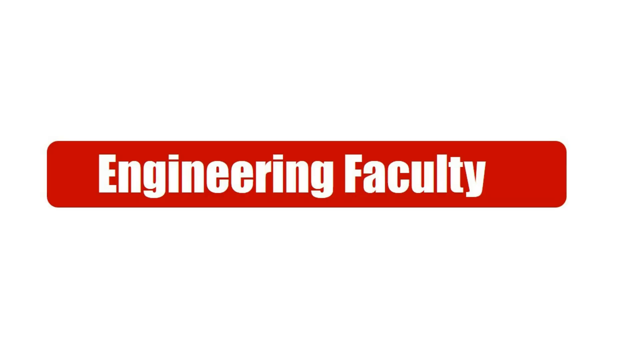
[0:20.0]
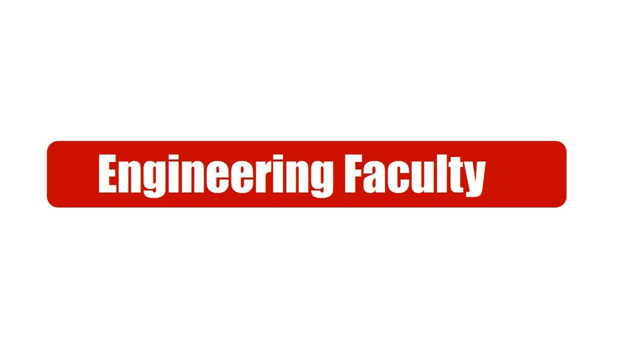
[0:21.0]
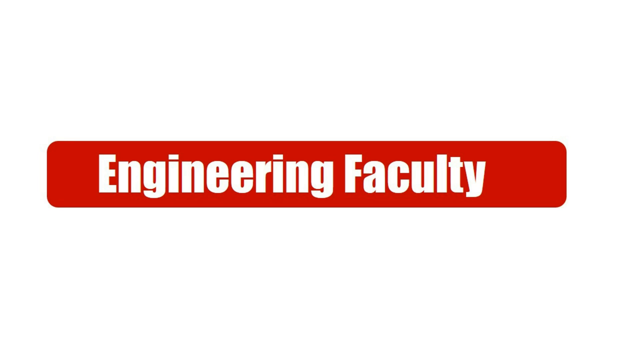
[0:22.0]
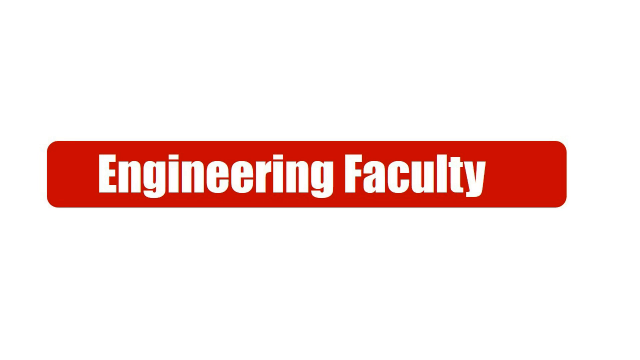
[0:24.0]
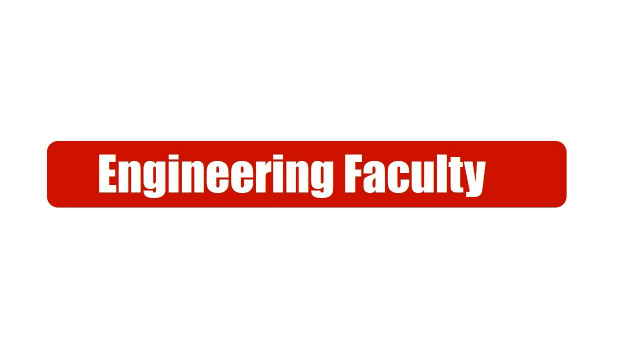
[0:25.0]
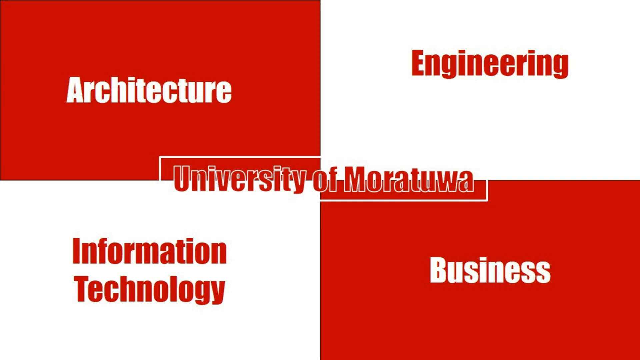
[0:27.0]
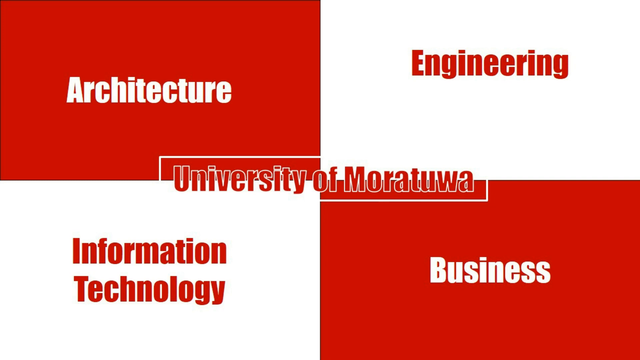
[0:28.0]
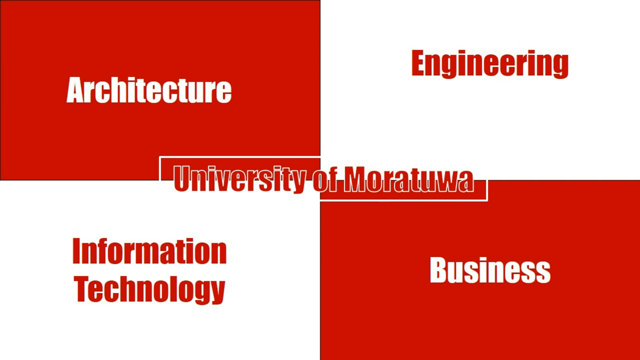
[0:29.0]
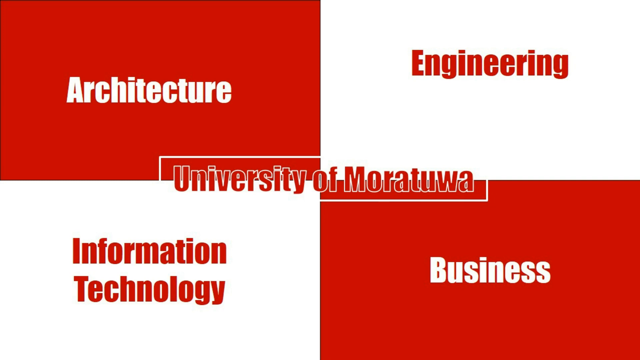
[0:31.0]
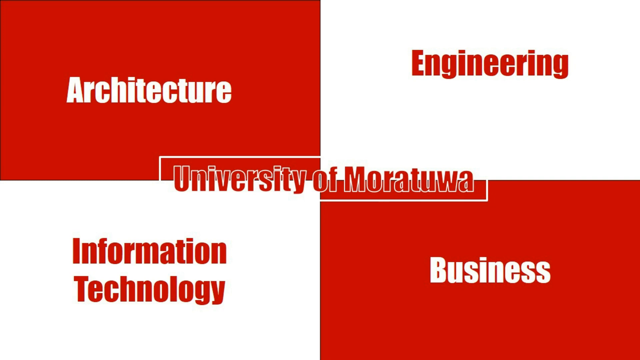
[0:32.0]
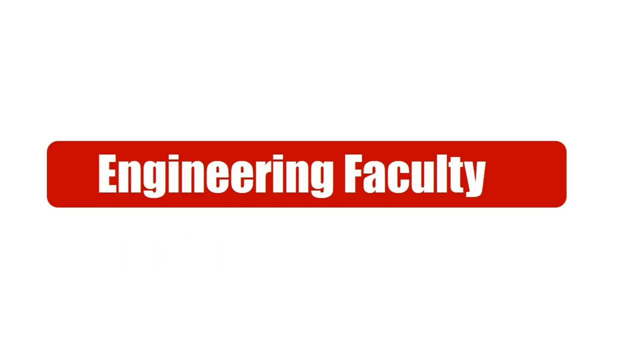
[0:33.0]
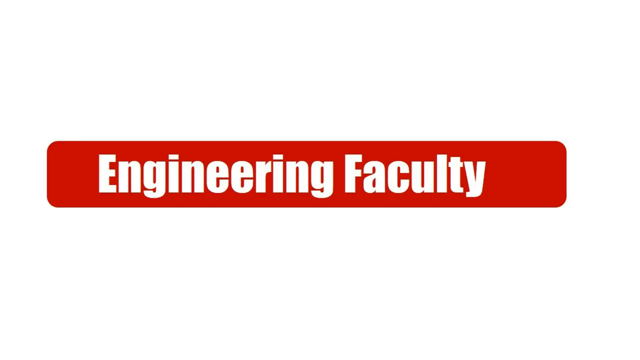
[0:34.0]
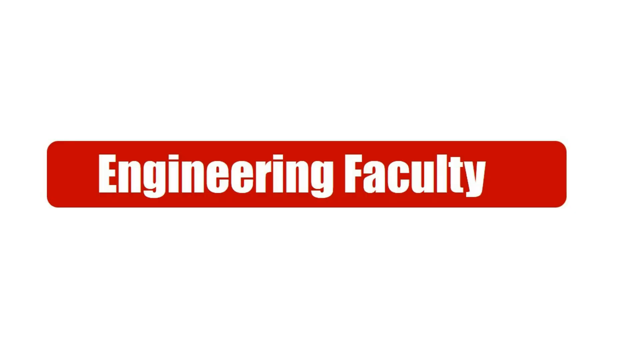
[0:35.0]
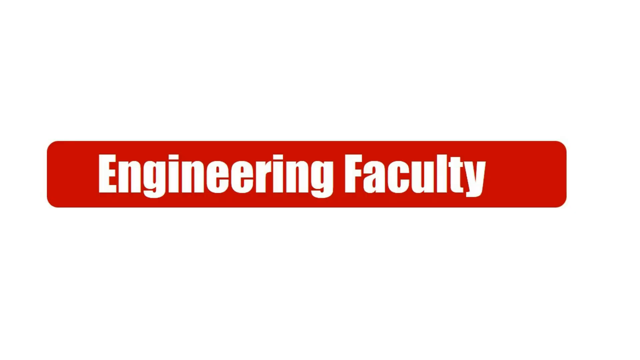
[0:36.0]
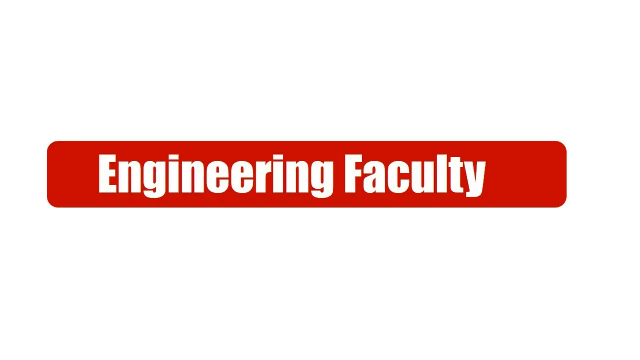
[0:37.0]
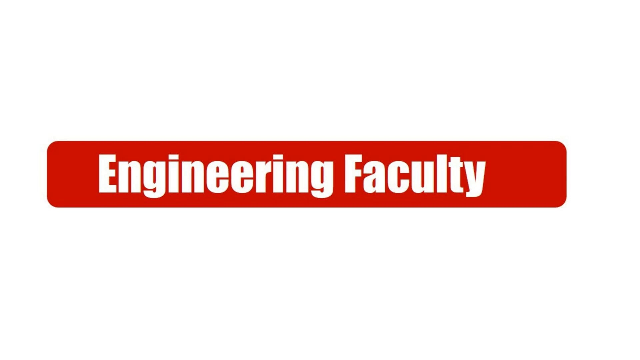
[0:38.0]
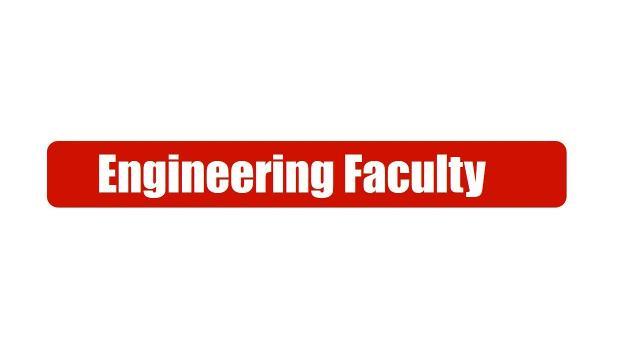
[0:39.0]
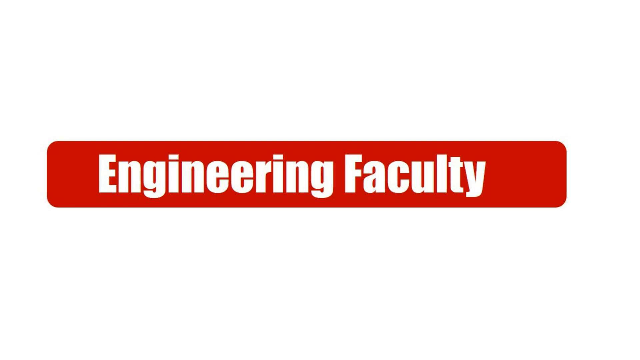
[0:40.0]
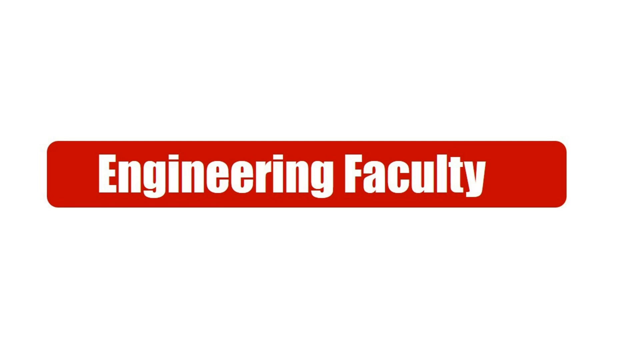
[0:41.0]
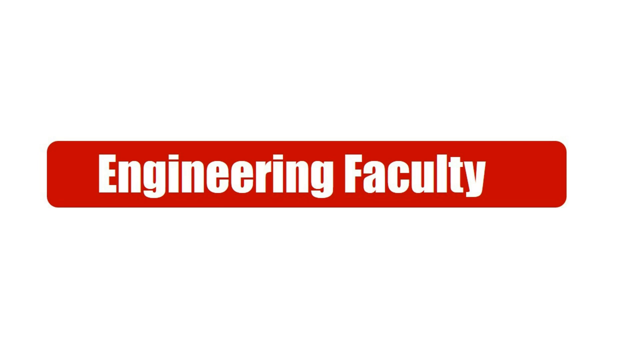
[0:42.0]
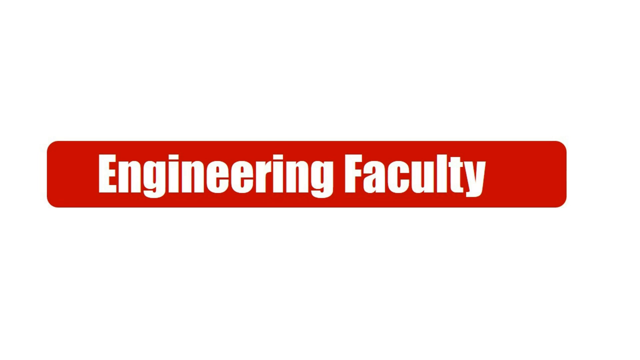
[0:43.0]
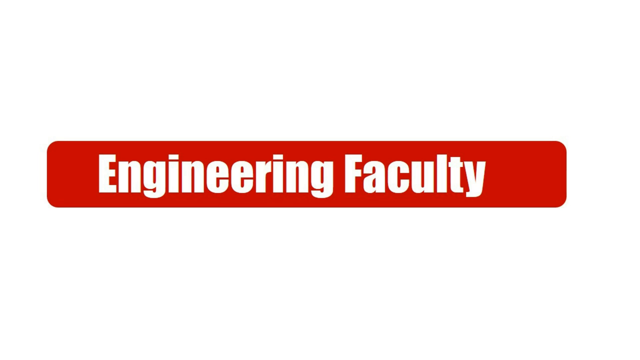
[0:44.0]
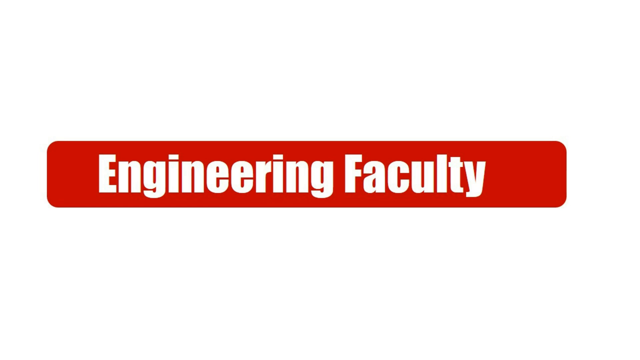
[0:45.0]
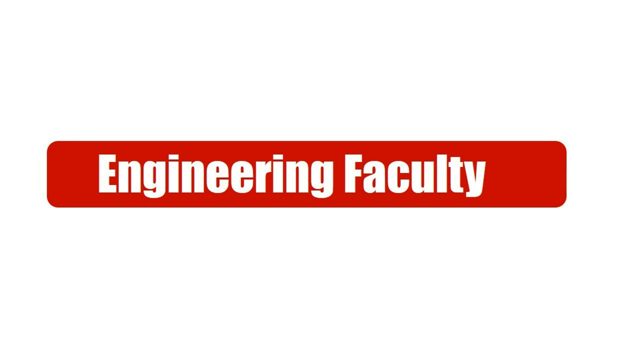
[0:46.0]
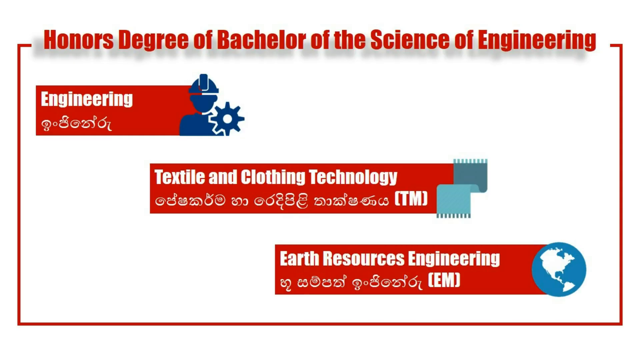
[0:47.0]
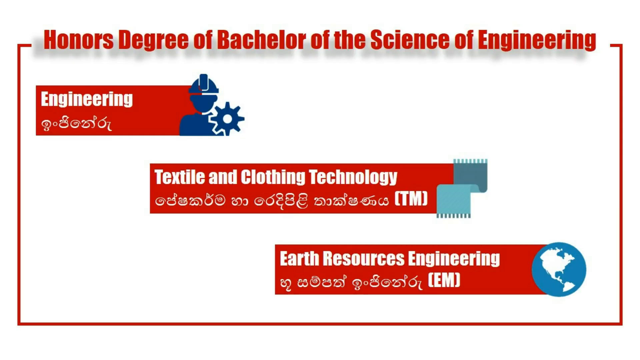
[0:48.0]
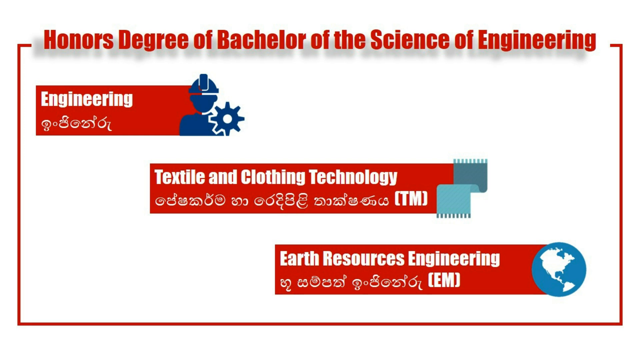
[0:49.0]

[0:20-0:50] The "engineering faculty" text is readable but a little dull looking, and the individual letters and the box are slightly not sharp. Next, a split screen of four boxes alternates colours: the top left is red, then white, and the bottom left is white, then red. "technology" is in red writing in a white box and "business" is in white writing in a red box. "University of Moratuwa" is centered in the middle across all the boxes. The video returns to "engineering faculty" on the same white background, again in reverse print, white lettering in a red box. Another white screen reads "honors bachelors of the Degree of bachelor of the science of engineering," with a little shadow underneath and a red border. Below, staggered starting under "honors," a red box says "engineering" in white, with some Arabic-looking text and a settings-wheel icon. Staggered to the right below it, a red box says "textile clothing technology," and staggered below that is "earth's resource engineering."